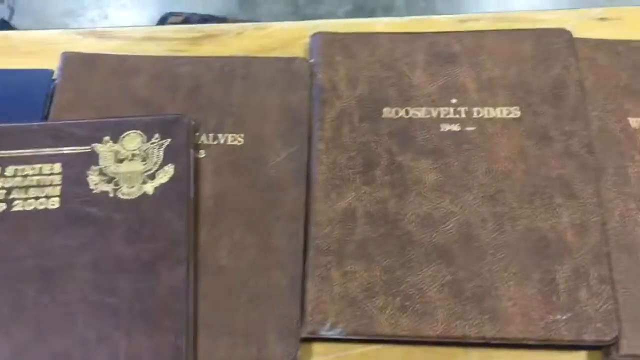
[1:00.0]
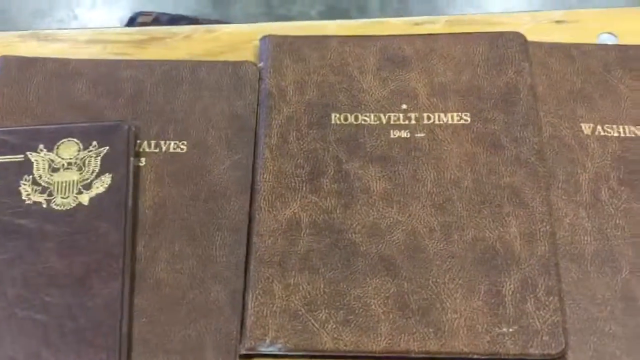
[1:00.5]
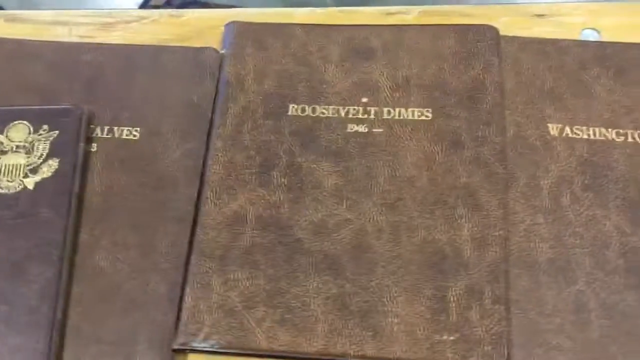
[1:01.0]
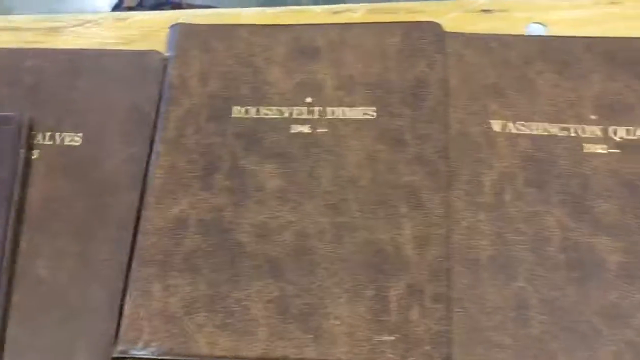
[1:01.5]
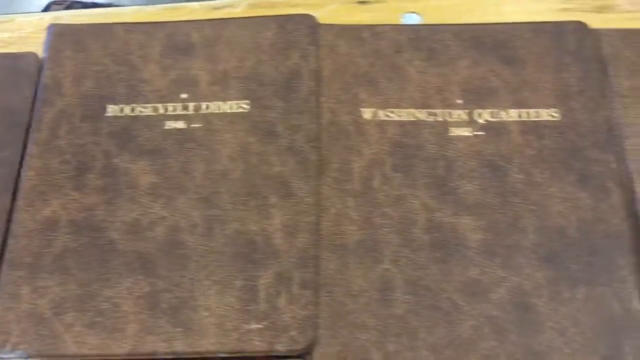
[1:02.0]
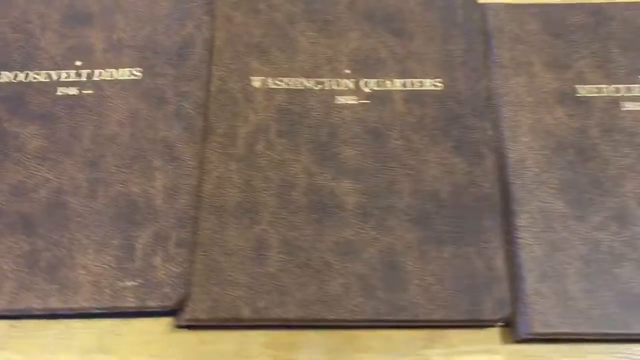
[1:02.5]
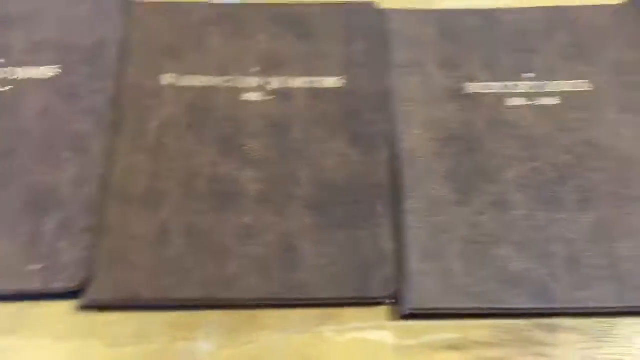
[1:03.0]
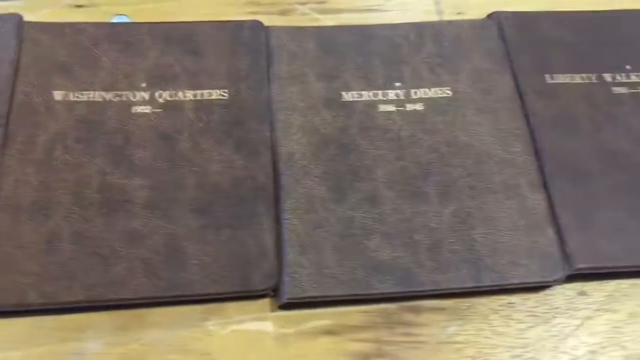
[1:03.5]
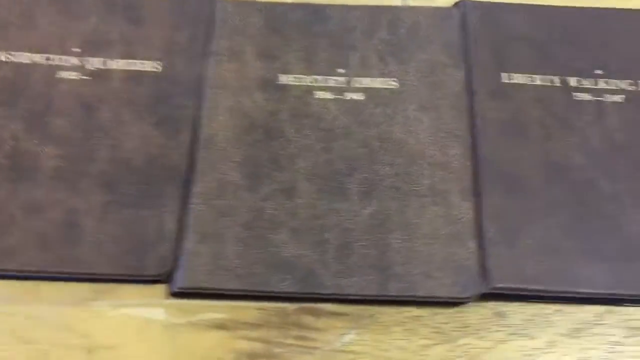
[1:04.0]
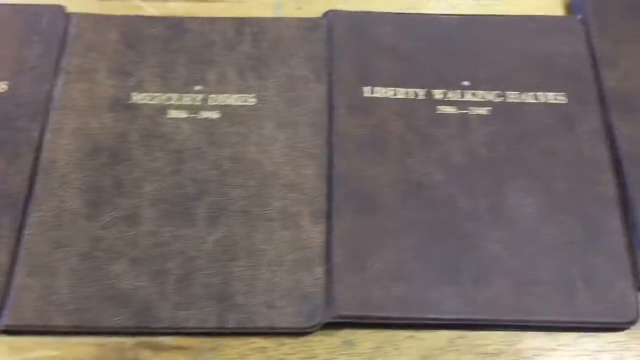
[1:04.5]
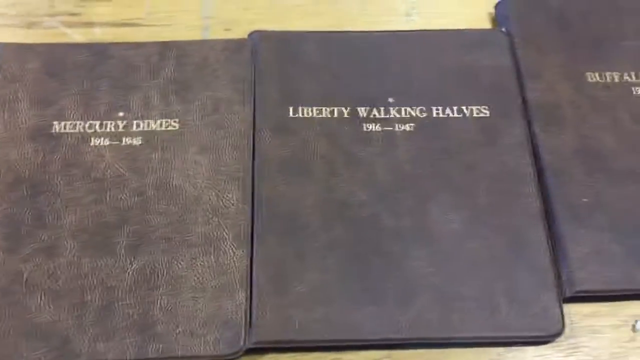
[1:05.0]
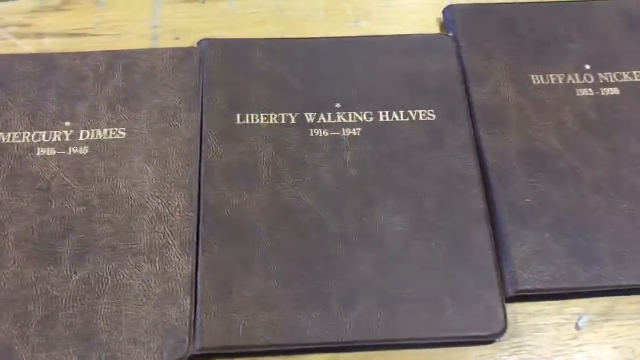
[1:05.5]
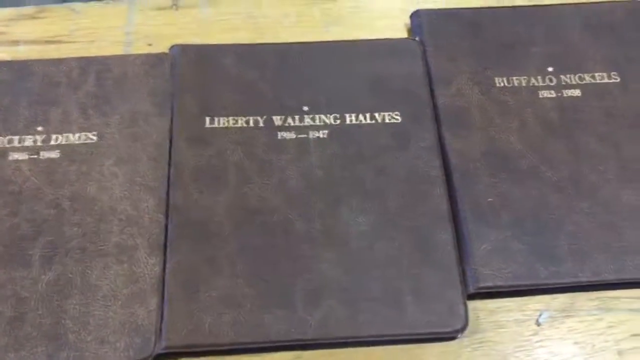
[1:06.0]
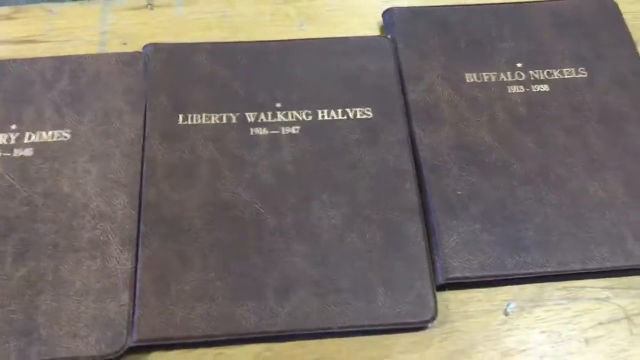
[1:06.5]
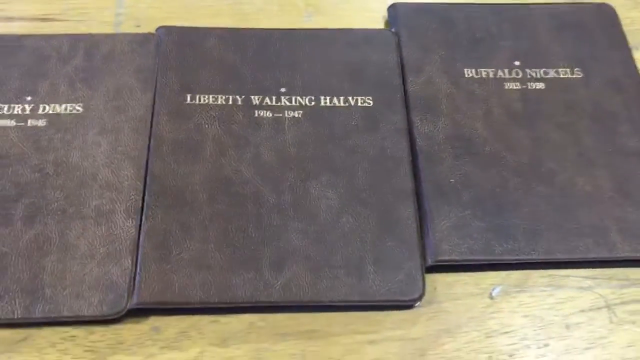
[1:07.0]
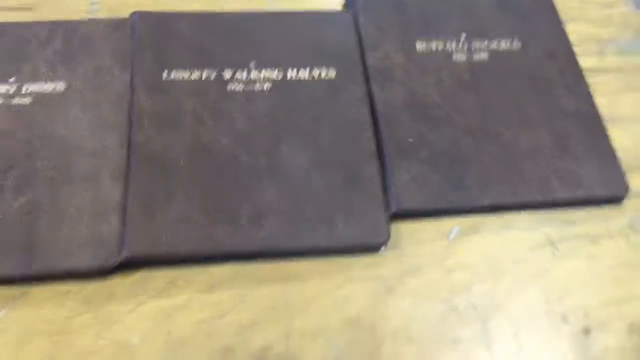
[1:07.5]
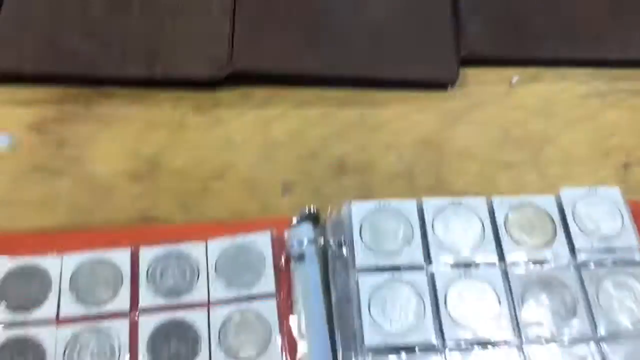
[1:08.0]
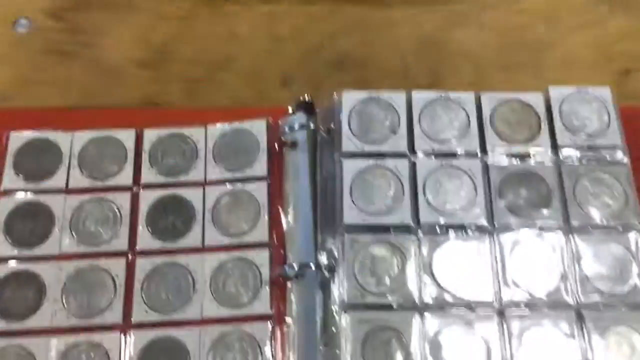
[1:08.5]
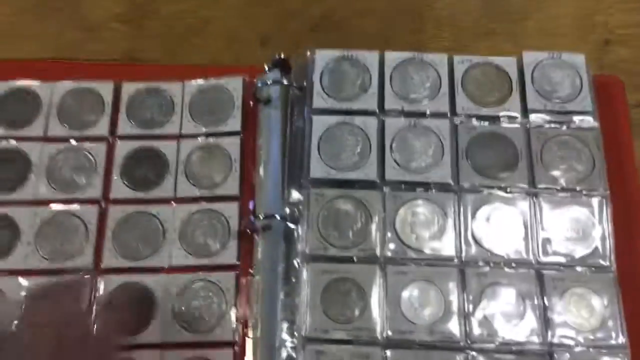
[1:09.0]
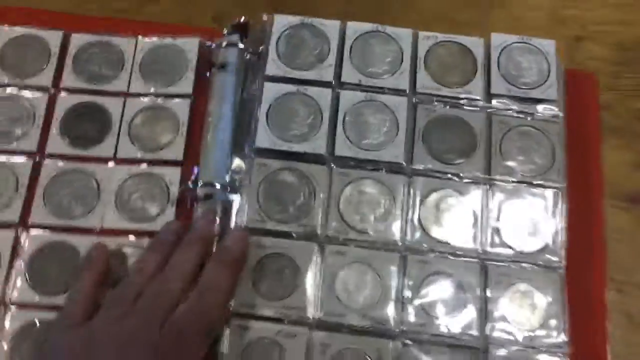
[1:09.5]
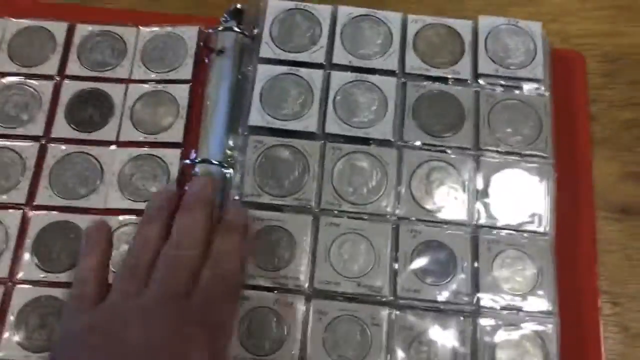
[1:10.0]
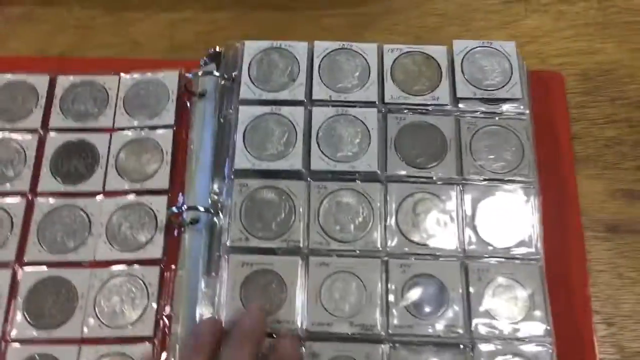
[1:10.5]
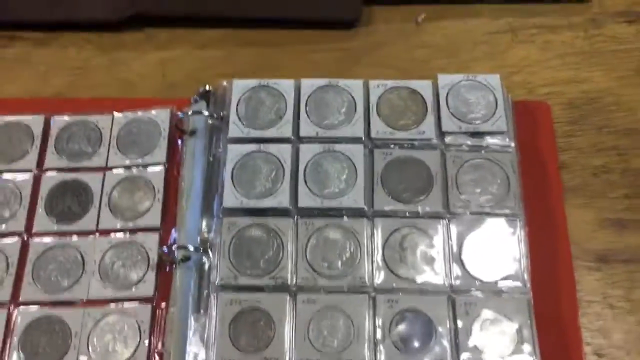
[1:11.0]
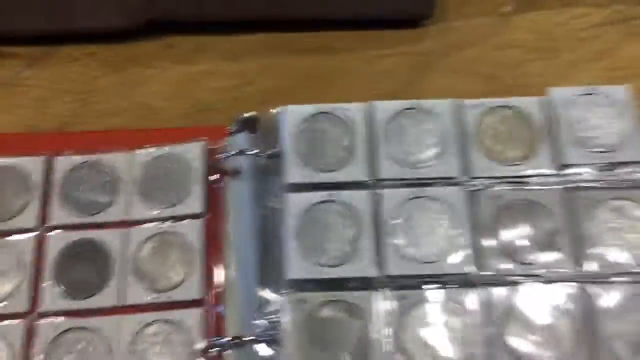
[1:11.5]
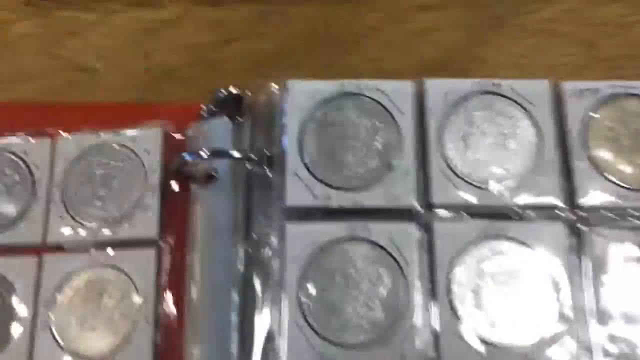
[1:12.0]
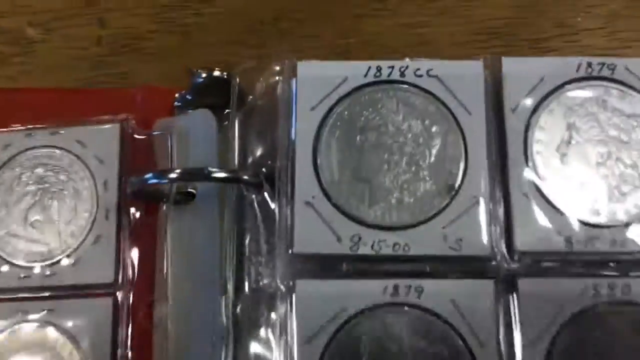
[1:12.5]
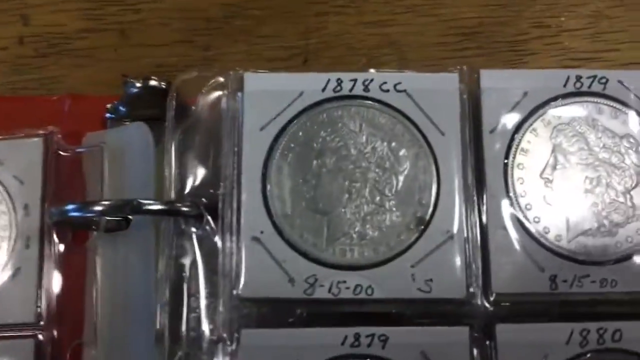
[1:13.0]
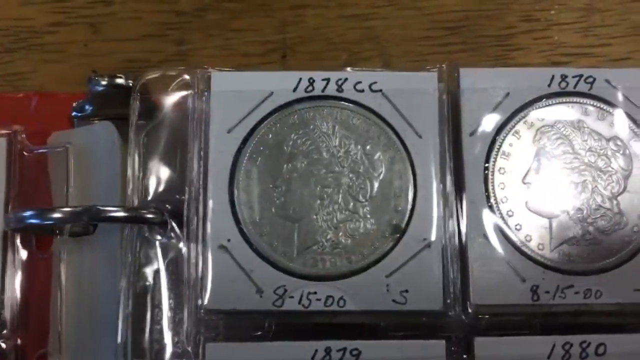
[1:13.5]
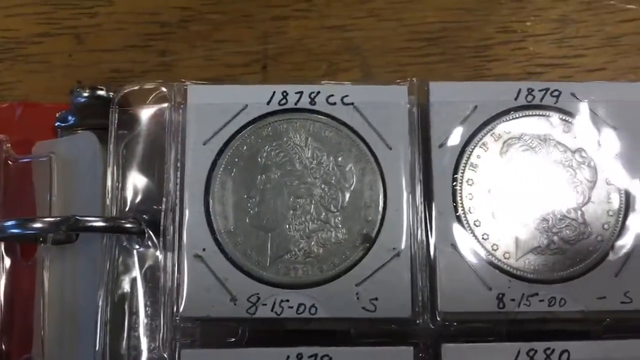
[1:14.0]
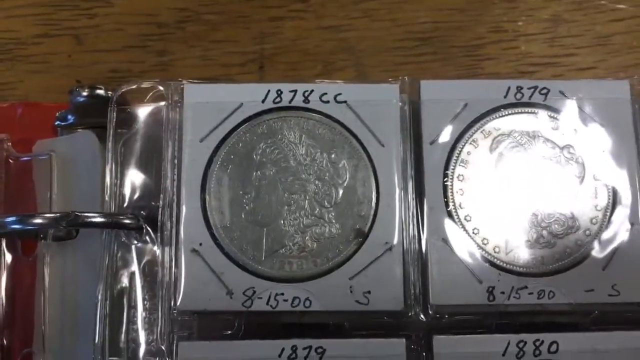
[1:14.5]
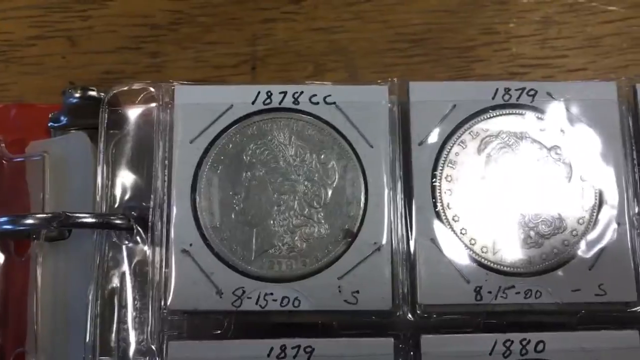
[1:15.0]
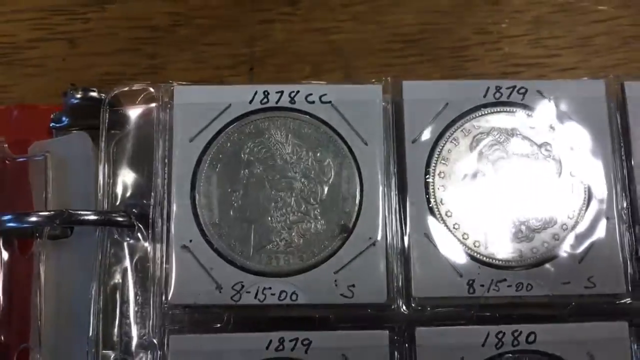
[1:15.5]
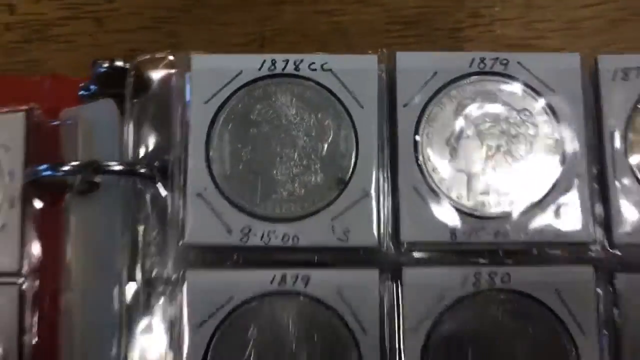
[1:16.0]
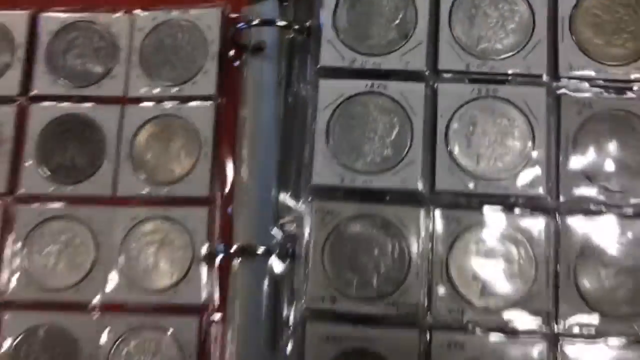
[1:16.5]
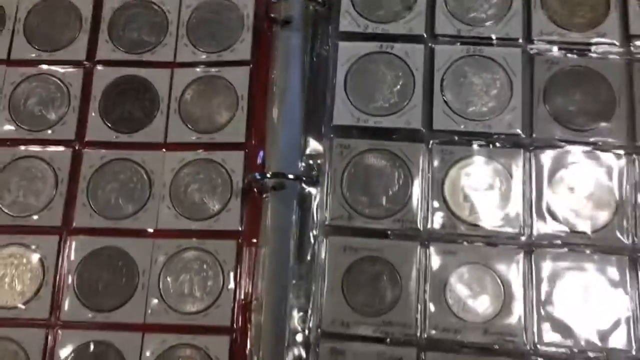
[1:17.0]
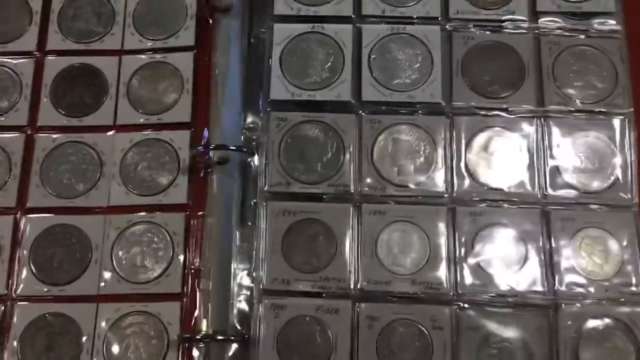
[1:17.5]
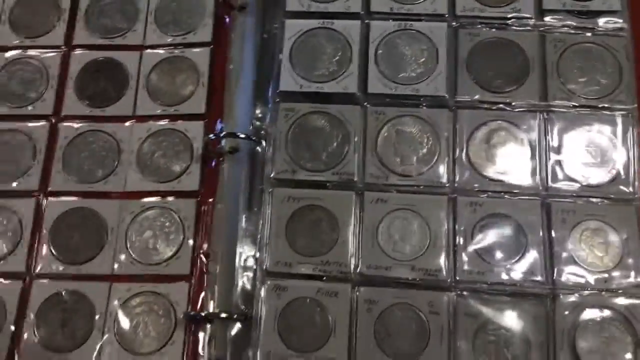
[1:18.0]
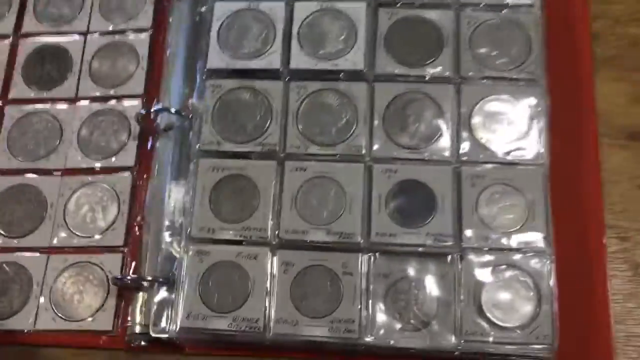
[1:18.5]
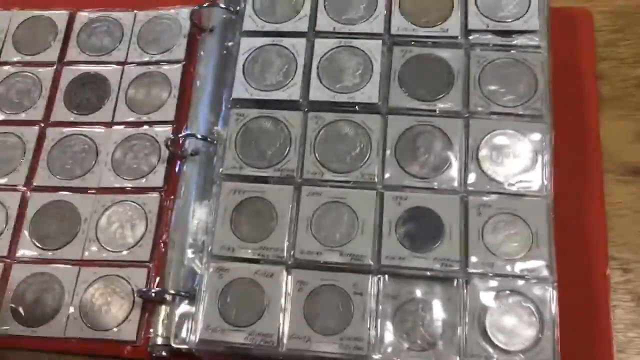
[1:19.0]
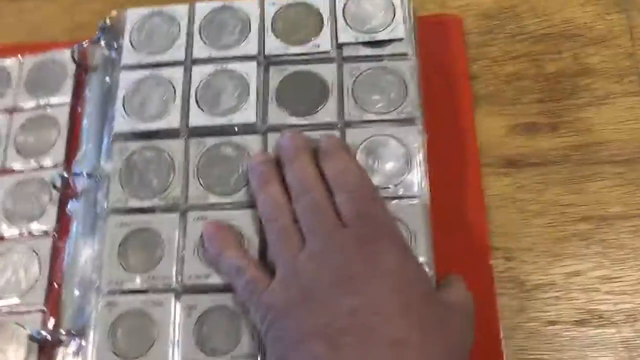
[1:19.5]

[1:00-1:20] Different books in navy, blue and a brownish color lie on top of a table, with different writing and signs on them. There is also the big maroon one holding coins, which show different numbers and different pictures or designs. A white person's hand keeps handling the big maroon file. Some writing is visible but not clear because the video moves fast. Silver coins are in the maroon files, on top of the brown, varnished table.